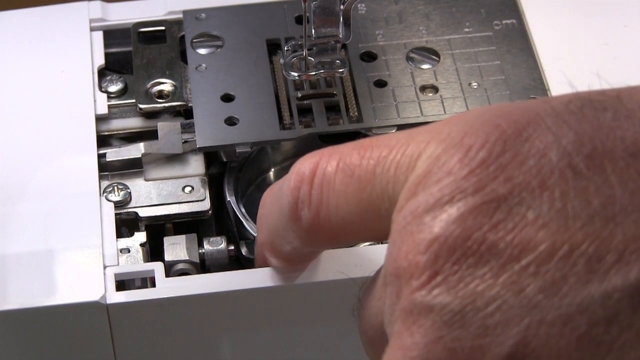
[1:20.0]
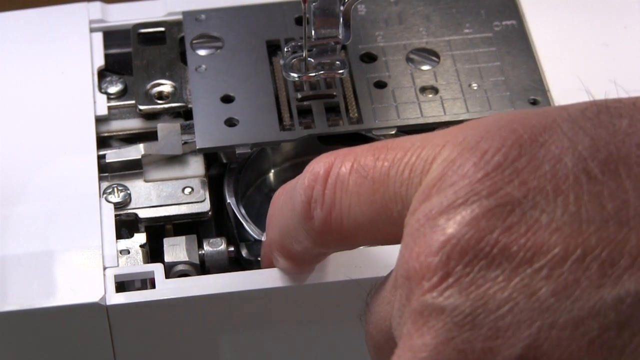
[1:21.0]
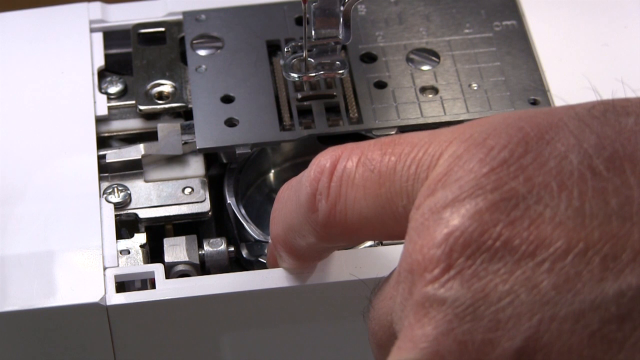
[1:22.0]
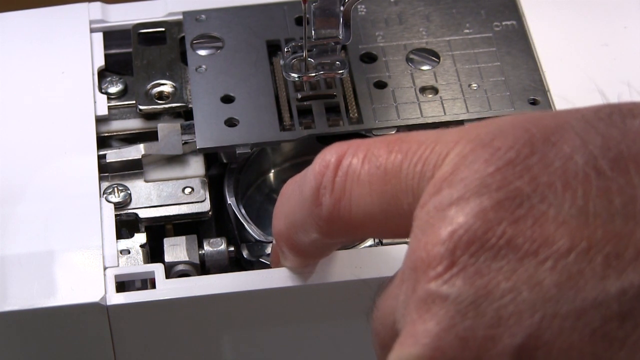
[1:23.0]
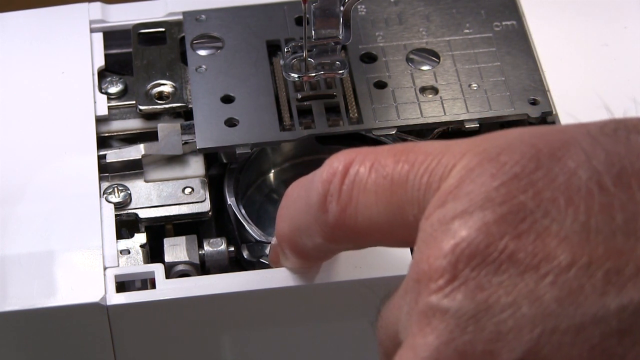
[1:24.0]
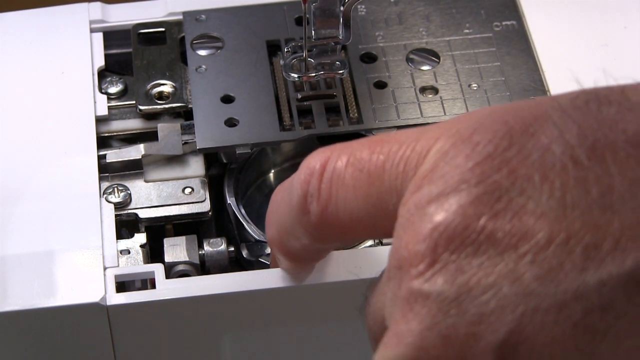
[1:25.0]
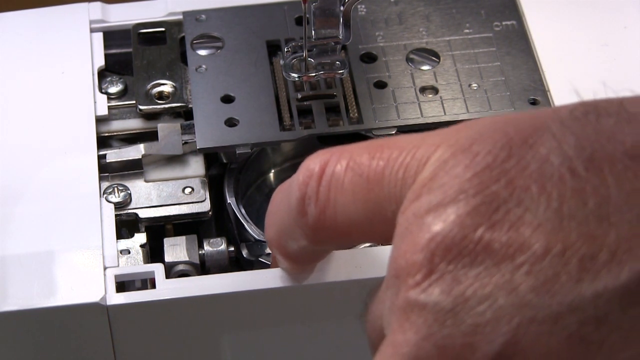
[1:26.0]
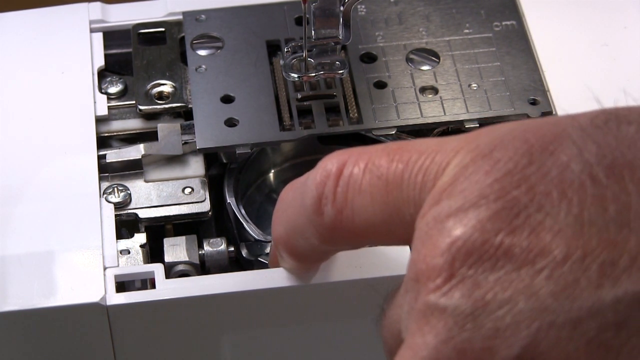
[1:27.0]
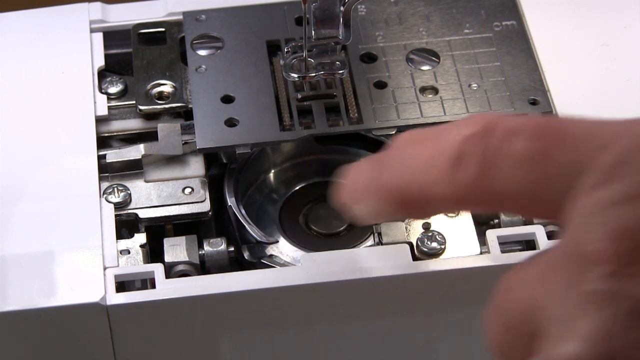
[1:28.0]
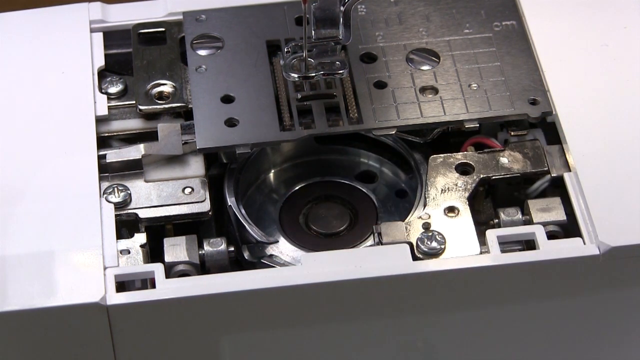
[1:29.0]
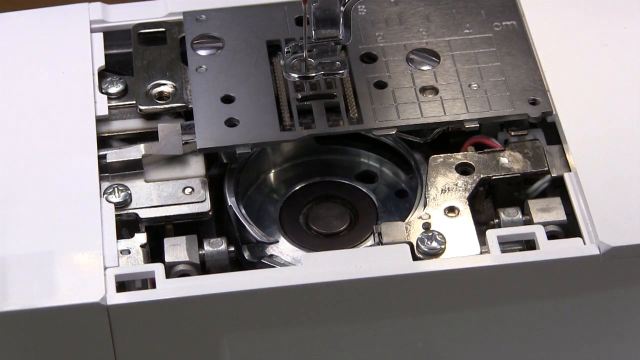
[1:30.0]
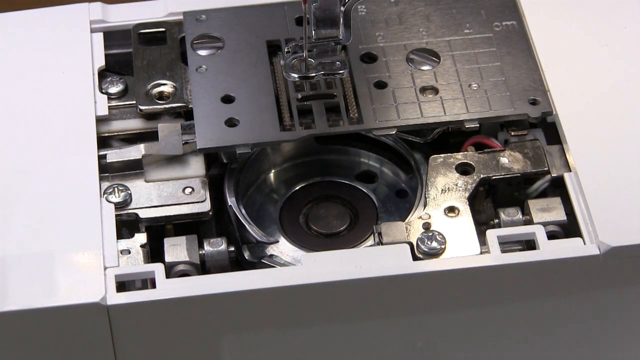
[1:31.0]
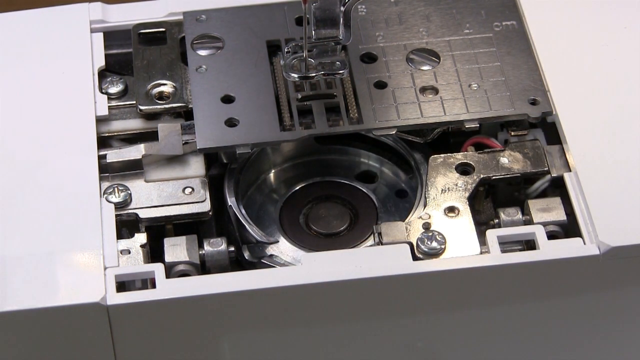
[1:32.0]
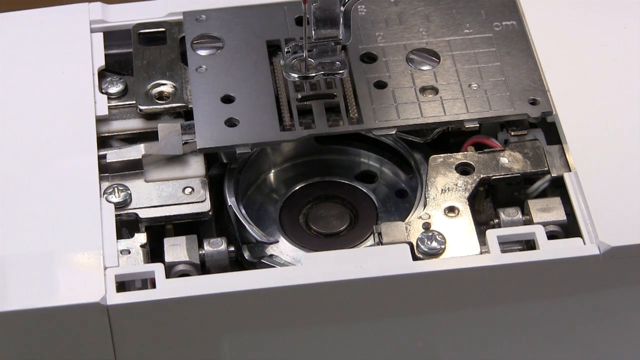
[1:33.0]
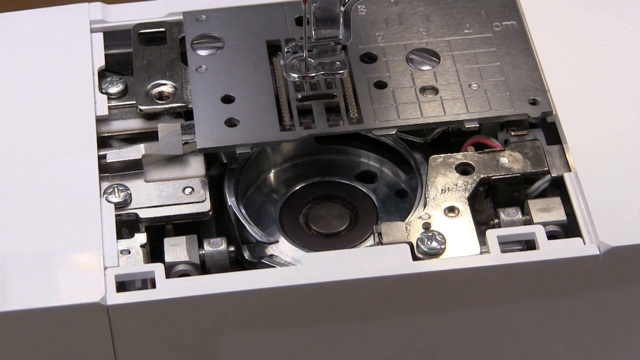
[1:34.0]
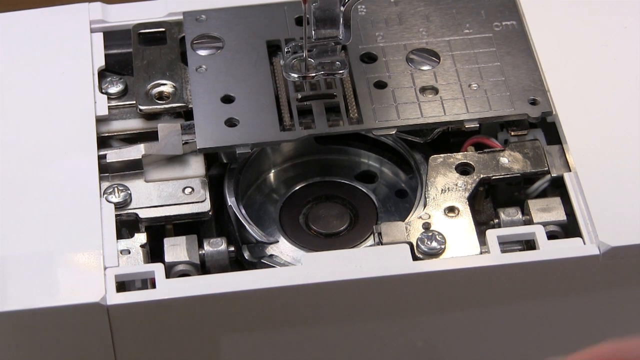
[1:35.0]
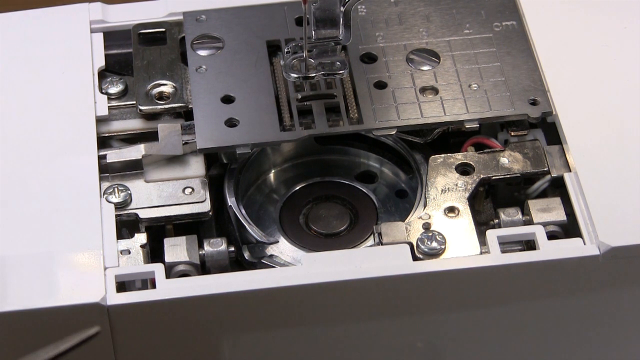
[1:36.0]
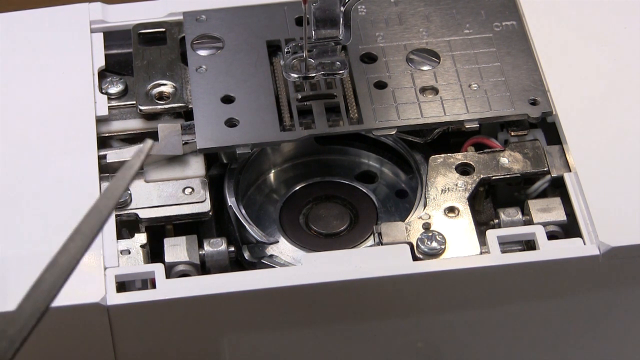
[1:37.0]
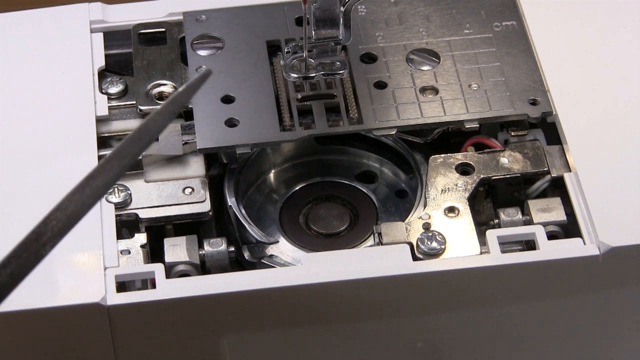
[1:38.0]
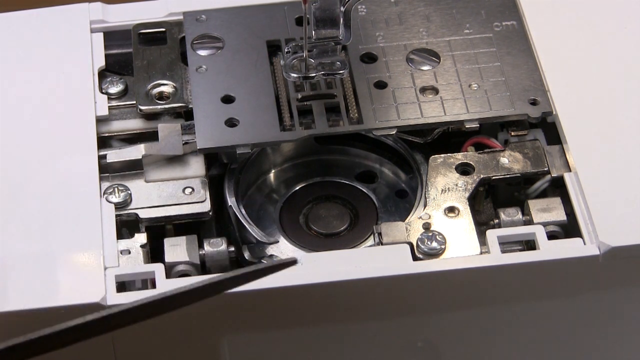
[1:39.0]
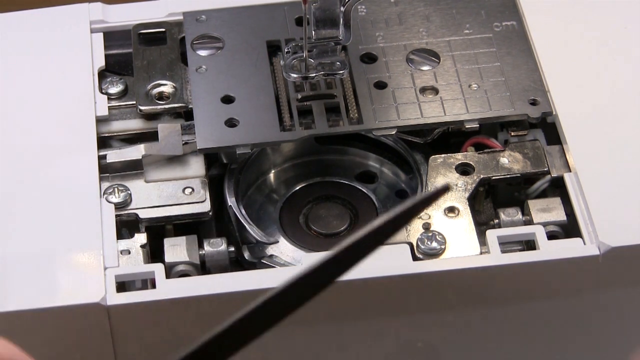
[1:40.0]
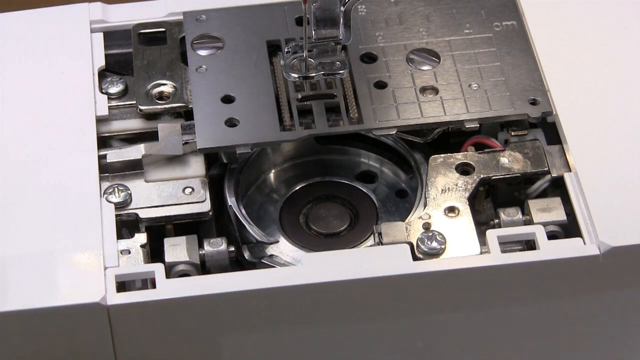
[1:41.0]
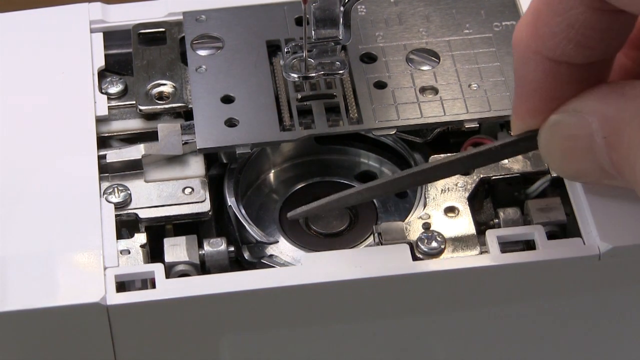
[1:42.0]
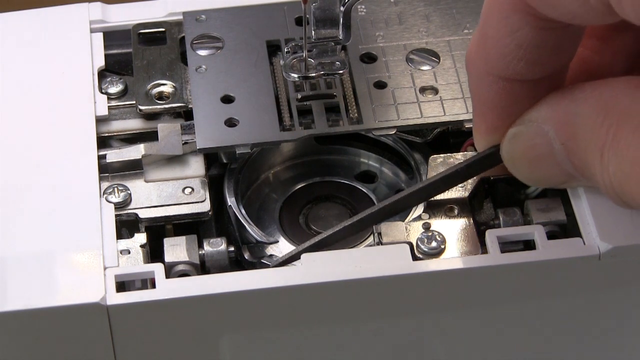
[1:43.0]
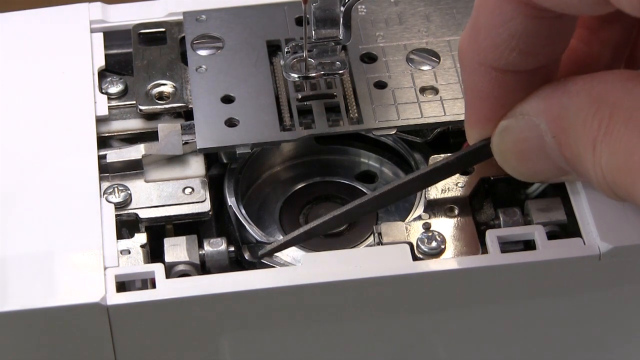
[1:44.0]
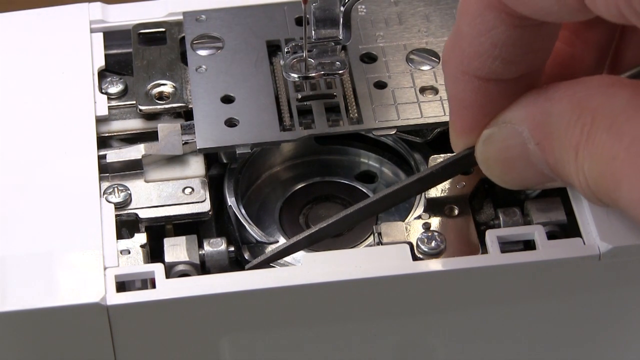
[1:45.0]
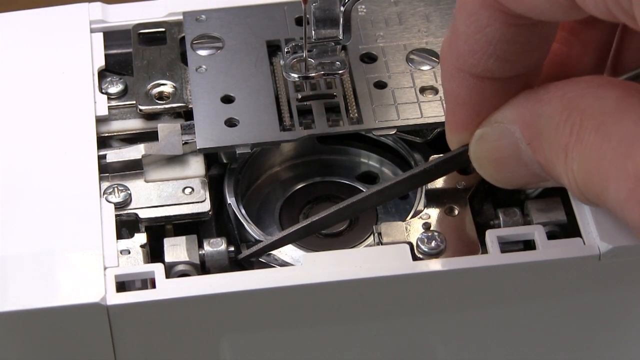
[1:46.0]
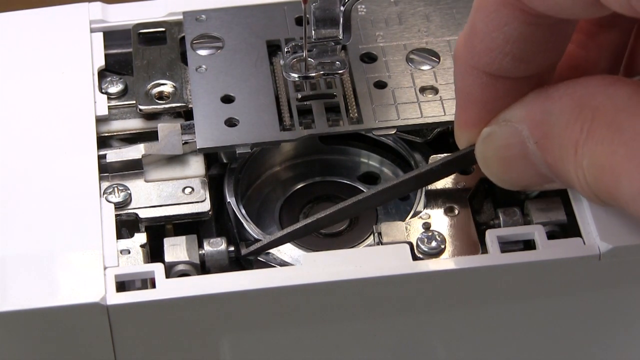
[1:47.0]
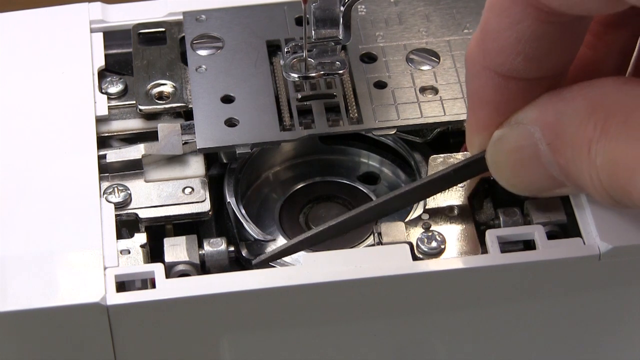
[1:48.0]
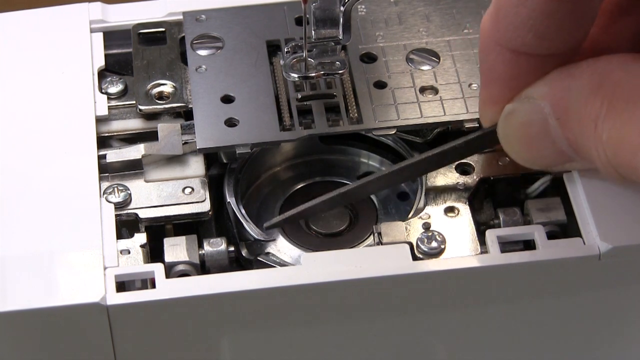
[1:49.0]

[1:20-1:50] The sewing machine is shown with the disassembled bobbin, which now has a circular empty space, the top part with the hole the needle goes through, the metal plate, and the white, probably plastic, parts of the machine. The man's left hand points into the bobbin and tries to move it for a few seconds. He then reaches out of frame and gets a metal piece with his right hand. With it, he appears to graze just the one pointed metal corner of the bobbin part, probably trying to make it work or help fix it.